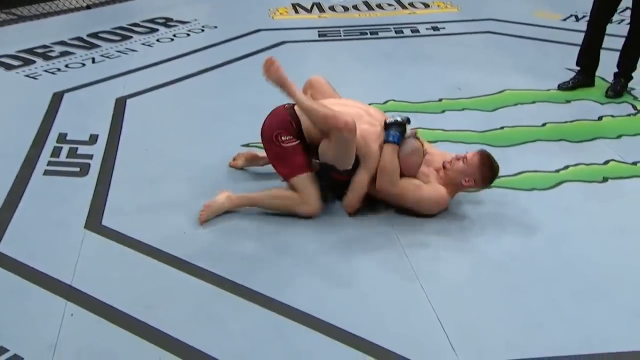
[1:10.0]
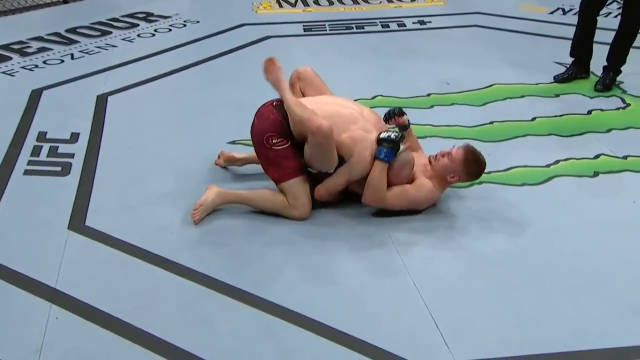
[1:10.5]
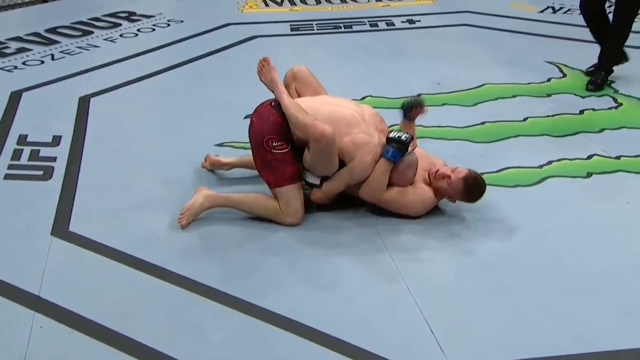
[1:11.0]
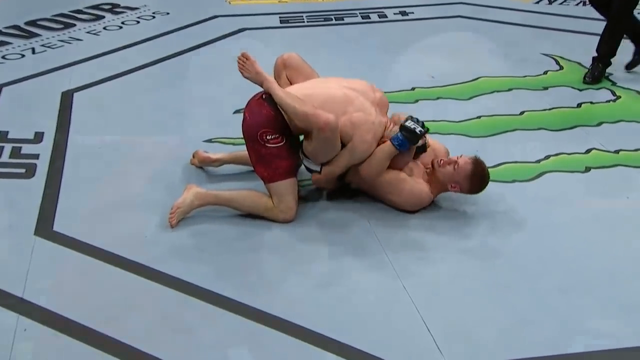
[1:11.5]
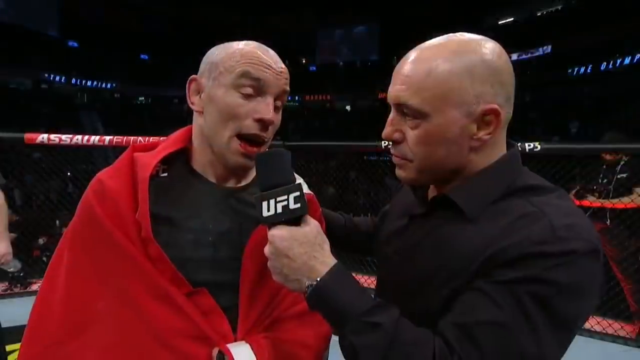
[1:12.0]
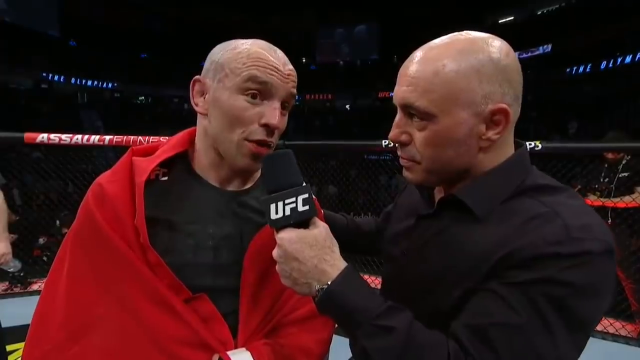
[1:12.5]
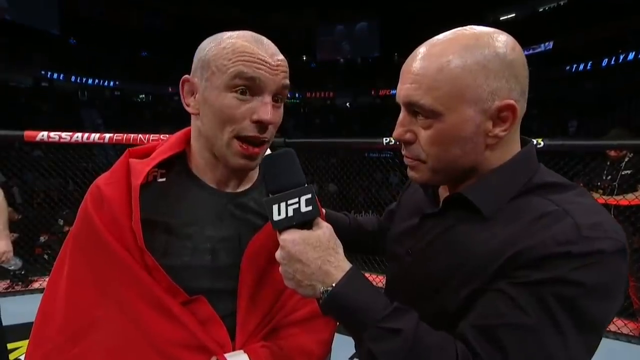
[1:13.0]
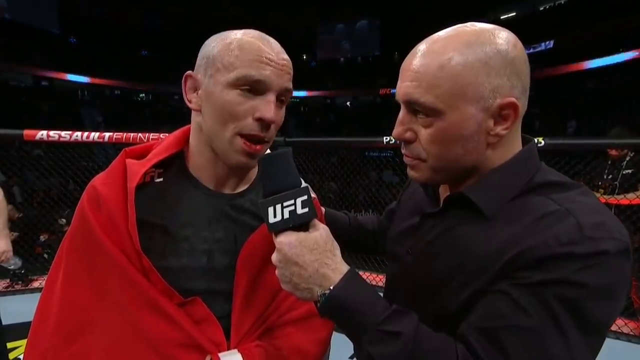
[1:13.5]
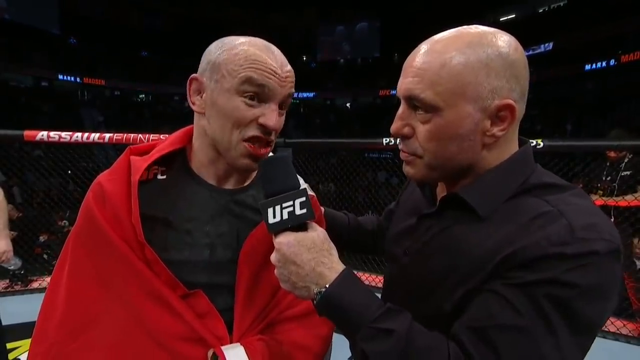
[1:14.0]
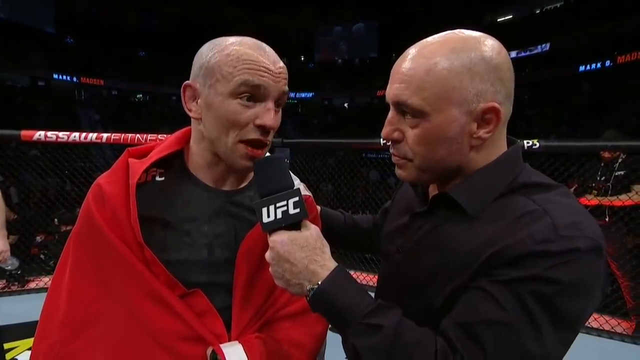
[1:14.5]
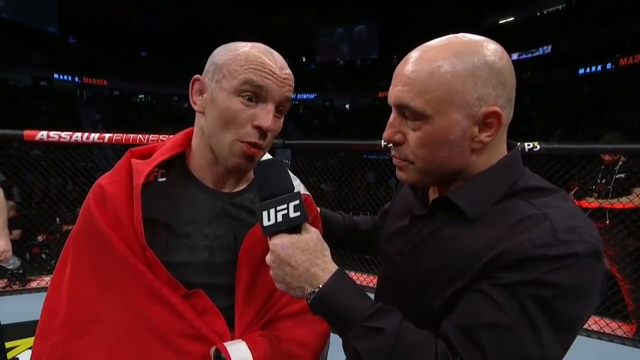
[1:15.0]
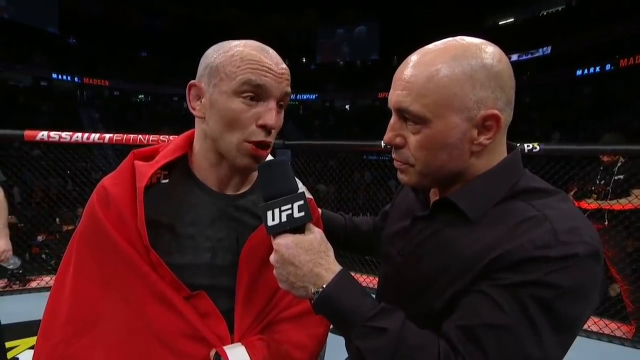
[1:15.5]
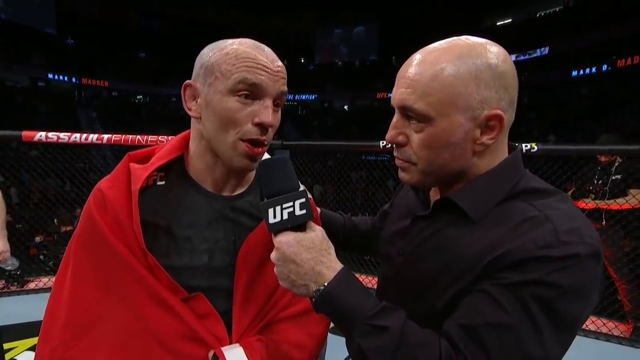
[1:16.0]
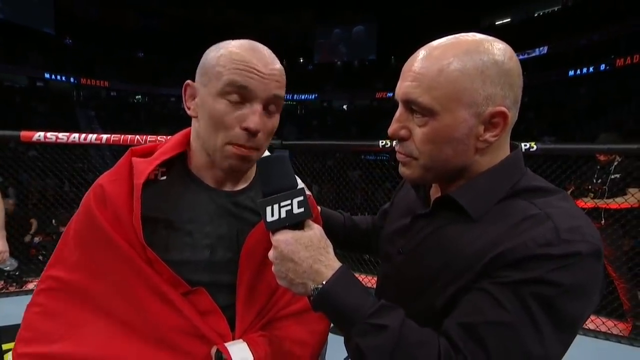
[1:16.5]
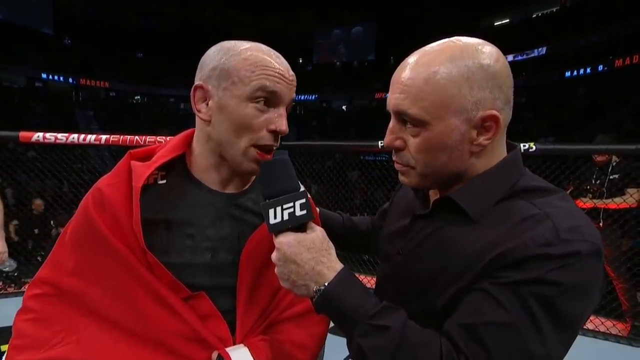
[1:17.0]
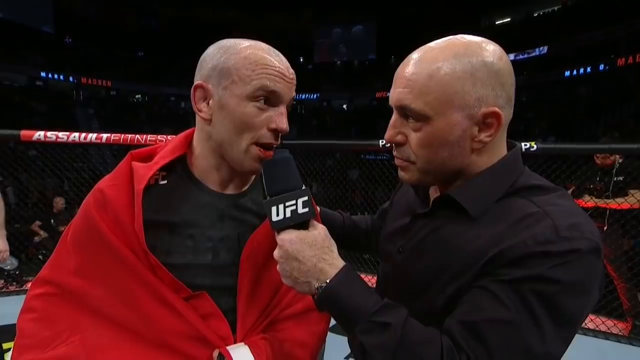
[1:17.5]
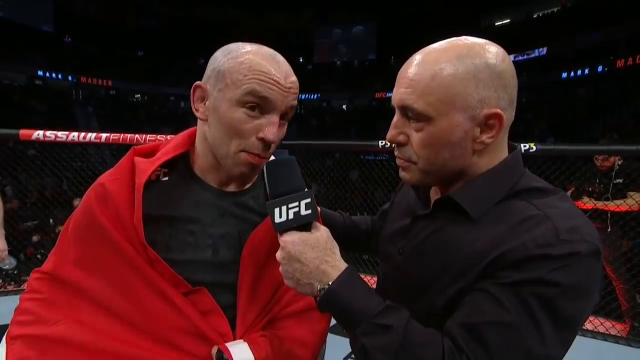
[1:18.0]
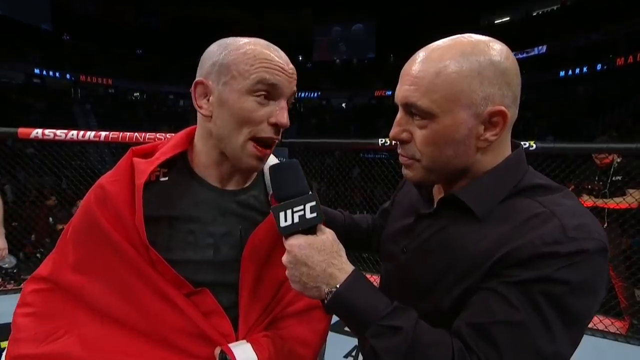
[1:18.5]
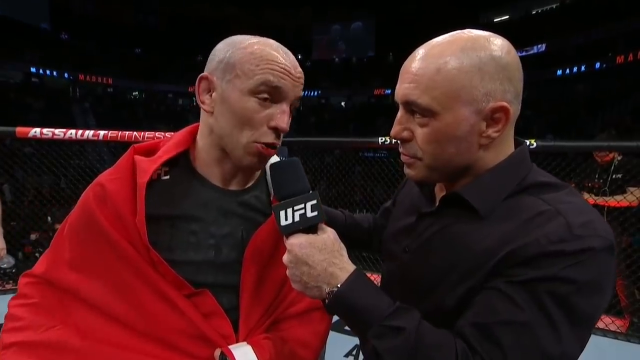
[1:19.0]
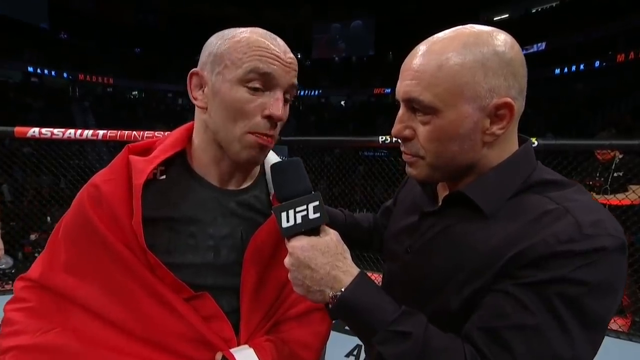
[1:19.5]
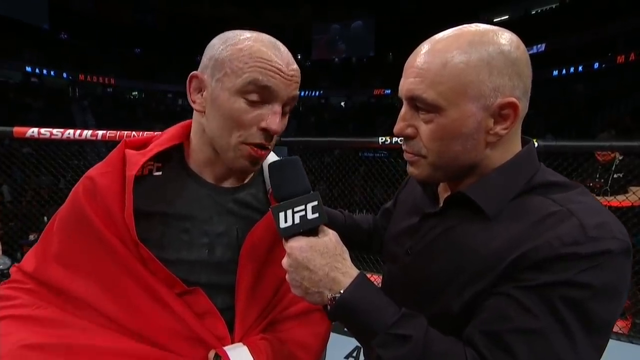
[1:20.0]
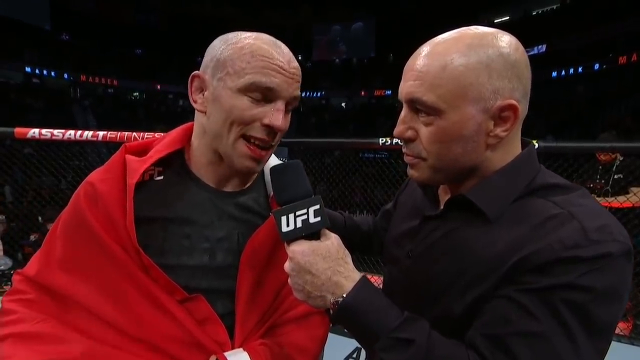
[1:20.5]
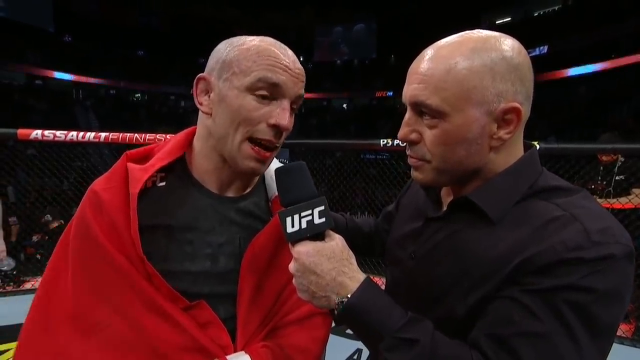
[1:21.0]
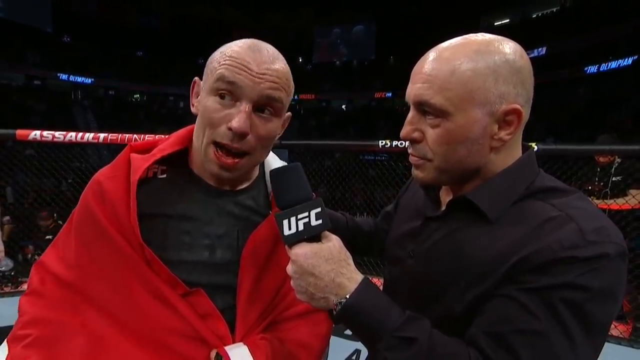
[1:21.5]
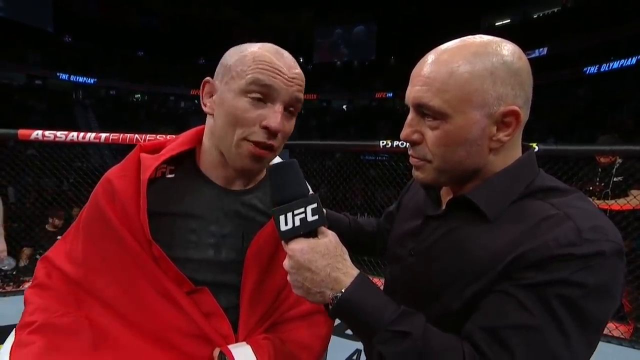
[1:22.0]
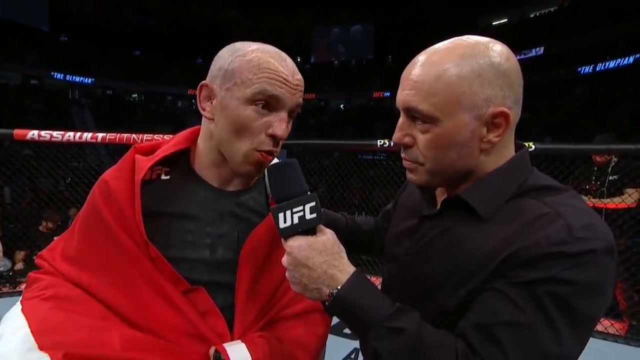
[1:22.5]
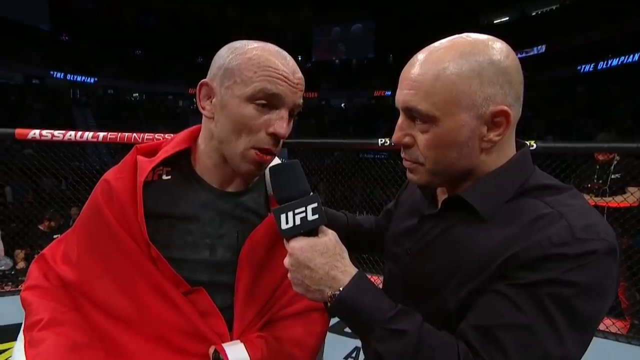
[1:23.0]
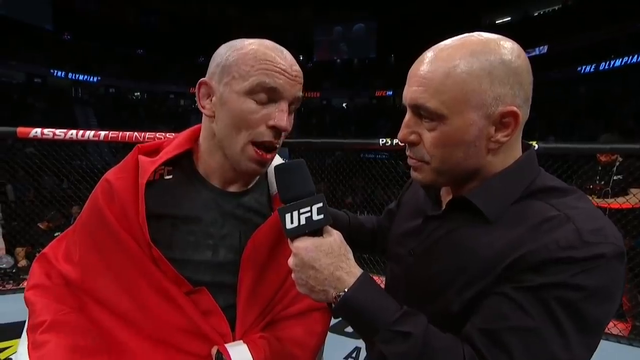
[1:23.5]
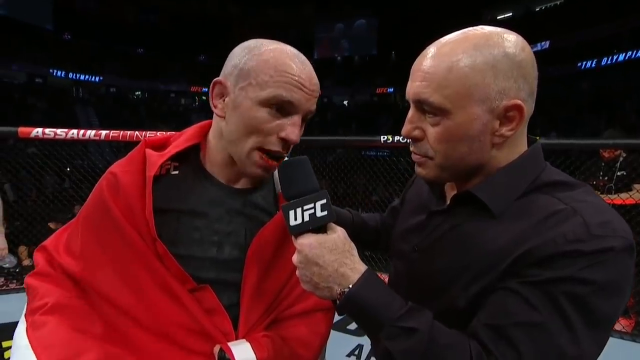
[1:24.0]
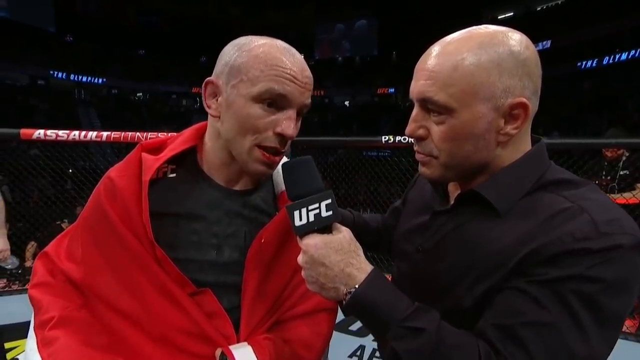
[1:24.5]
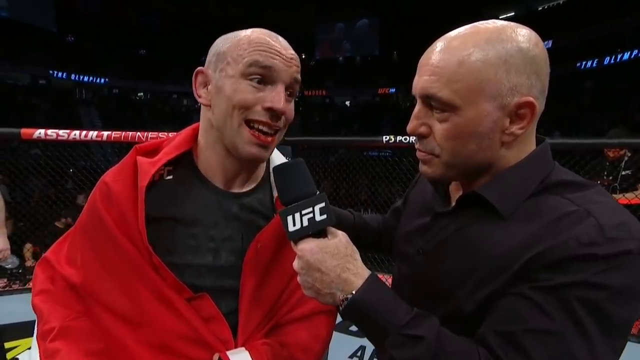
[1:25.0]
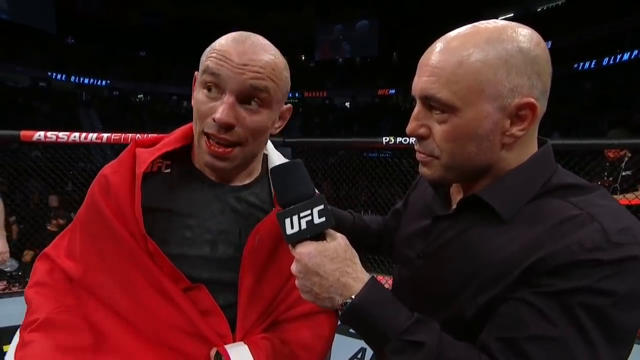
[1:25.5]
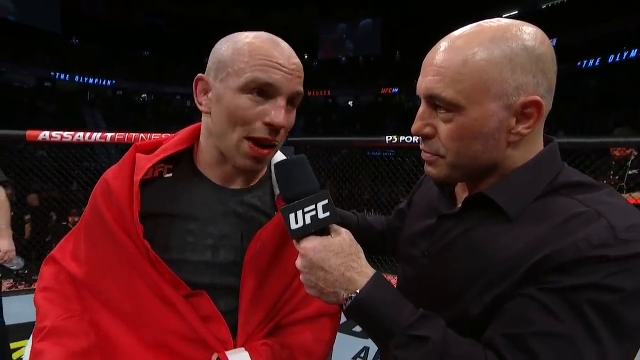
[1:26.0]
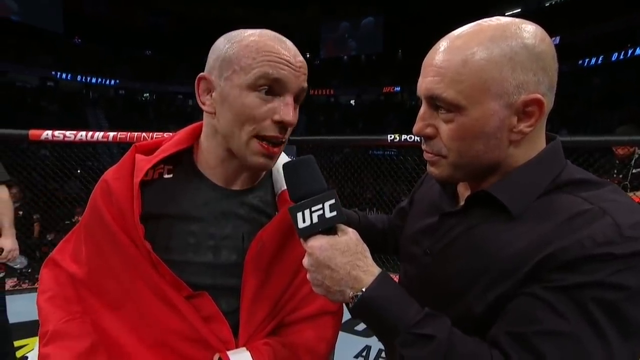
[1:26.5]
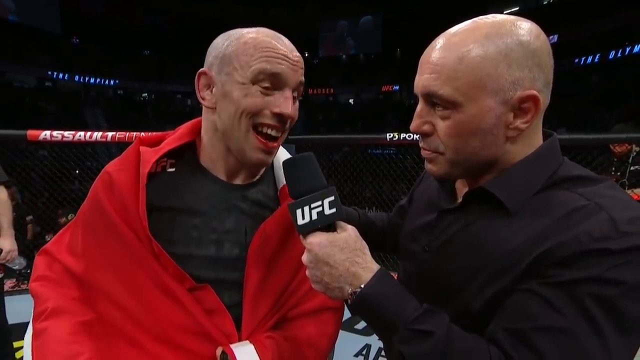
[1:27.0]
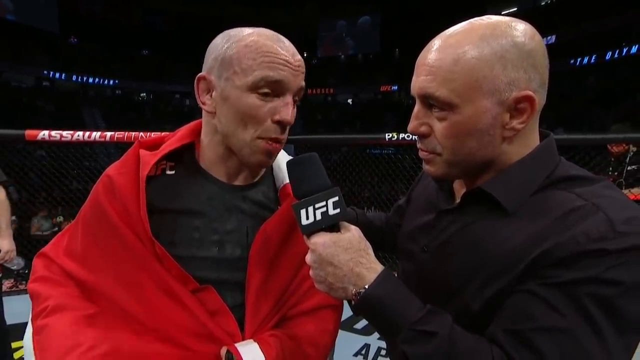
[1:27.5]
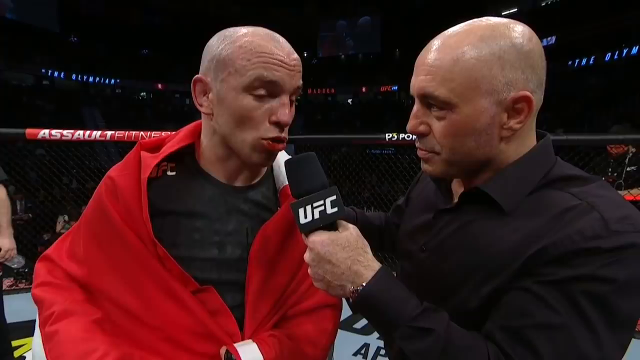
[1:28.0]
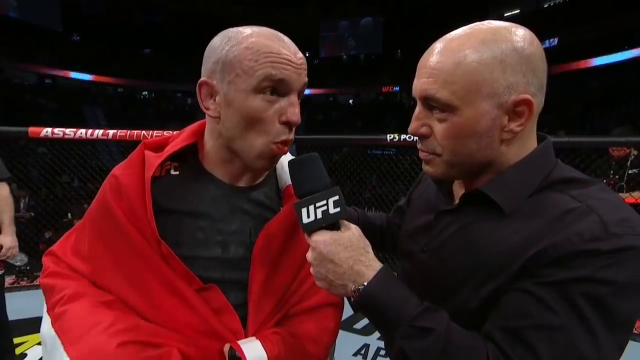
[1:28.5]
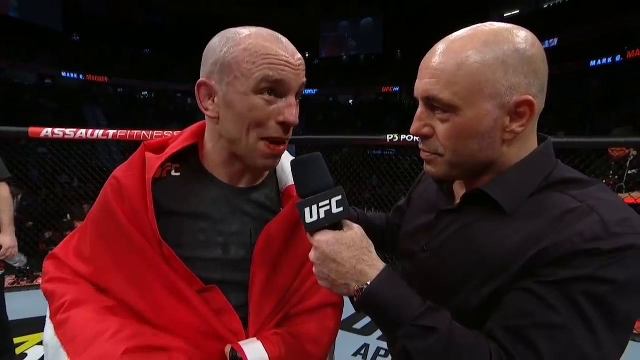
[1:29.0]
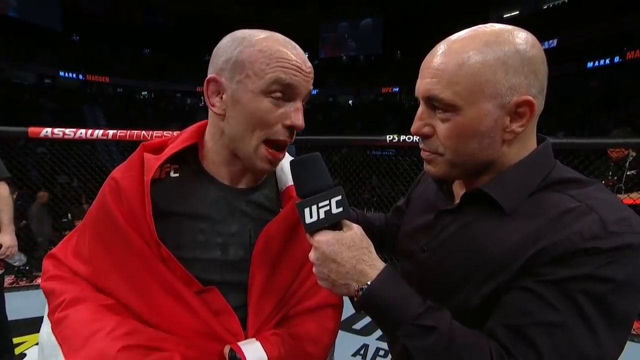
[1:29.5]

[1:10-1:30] The montage ends and the video returns to Rogan and Madsen's interview. Madsen still has the flag draped around him; it is red and white with a white cross, possibly Denmark's. Madsen is still holding the mic in his left hand, and Rogan apparently still has his hand on Madsen's left shoulder. Madsen is talking. The background is dark, with the octagon visible and some neon or LED lighting, as if in some kind of stadium; the crowd is barely visible. The UFC watermark is at the bottom right. Madsen is deliberate and demonstrative, not moving his hands around as much, while Rogan nods his head in acknowledgement.